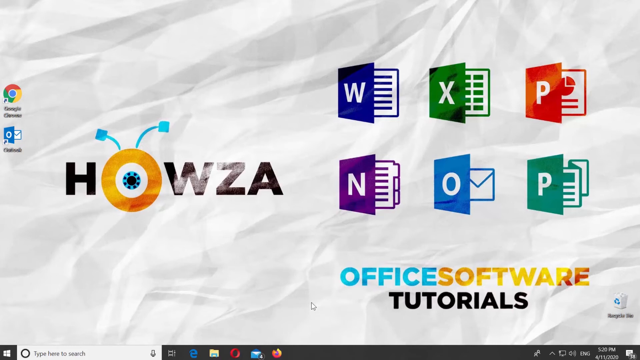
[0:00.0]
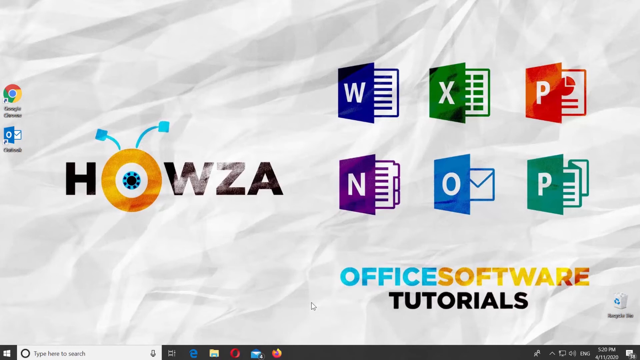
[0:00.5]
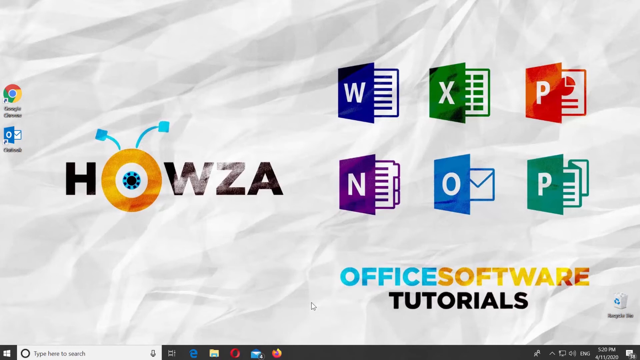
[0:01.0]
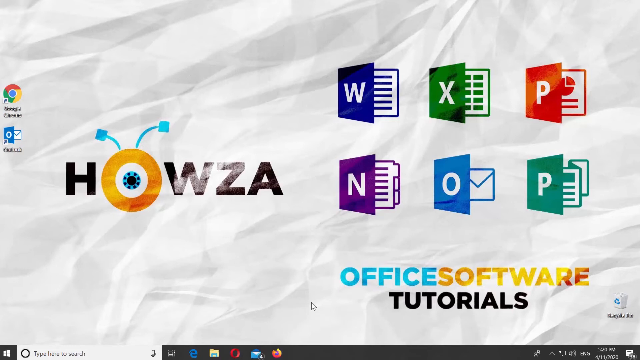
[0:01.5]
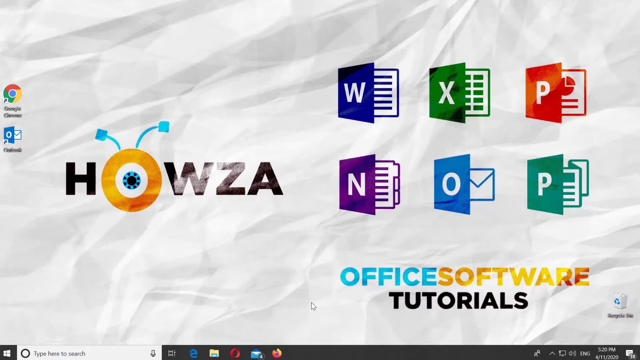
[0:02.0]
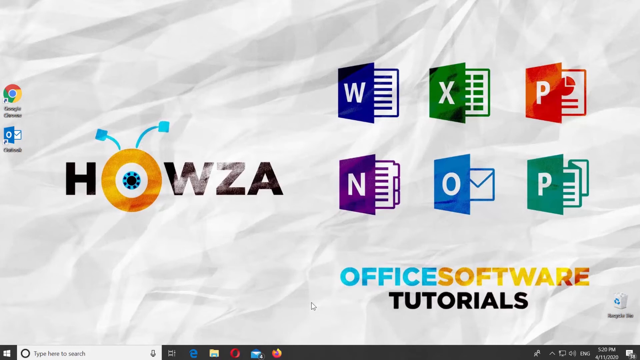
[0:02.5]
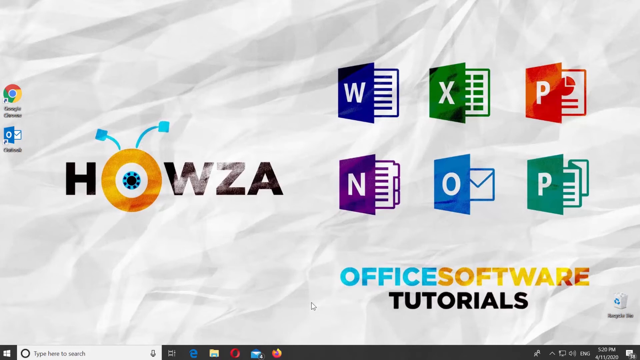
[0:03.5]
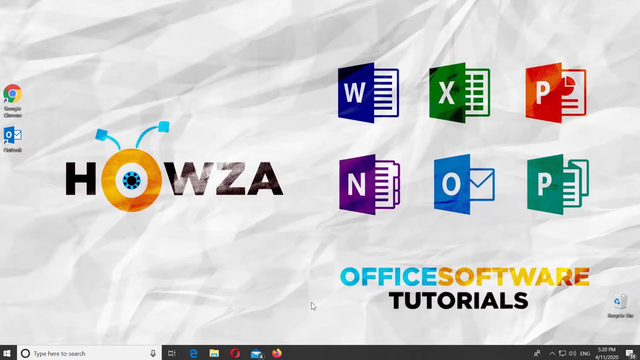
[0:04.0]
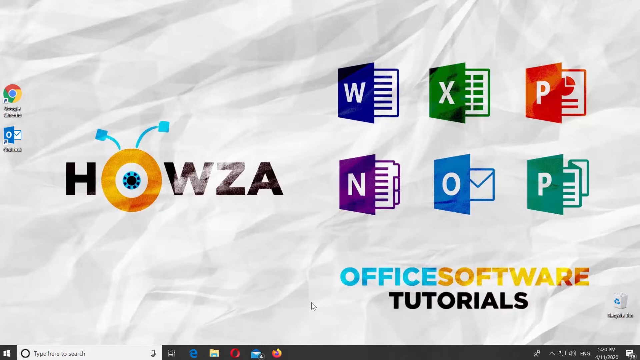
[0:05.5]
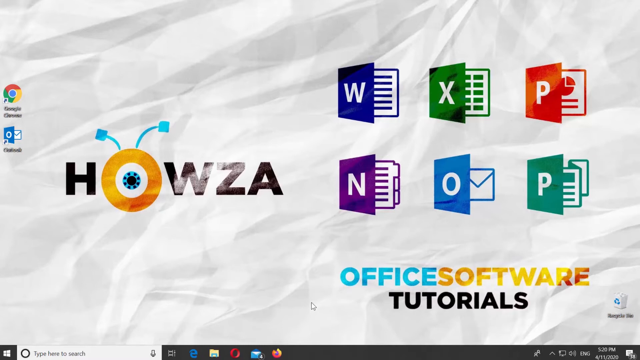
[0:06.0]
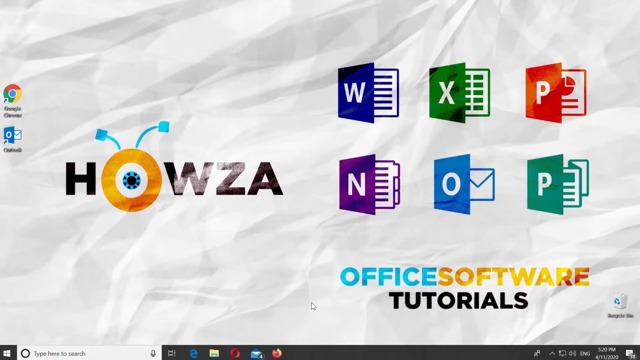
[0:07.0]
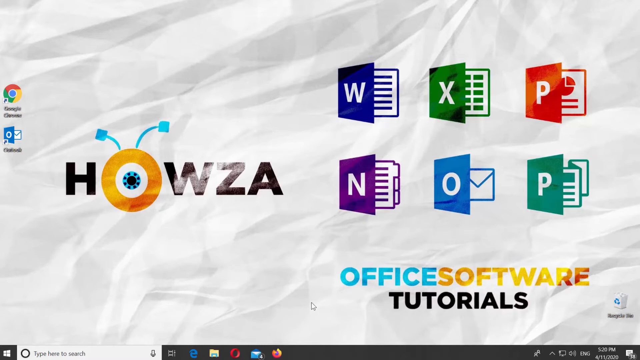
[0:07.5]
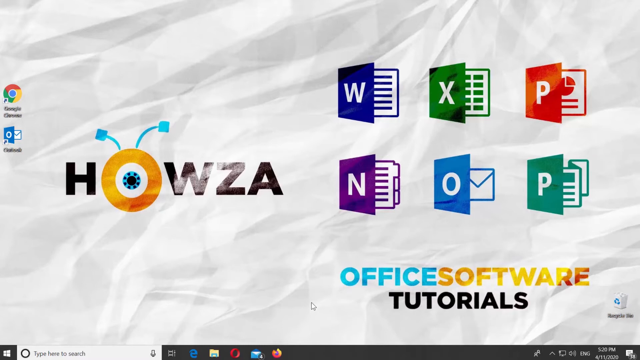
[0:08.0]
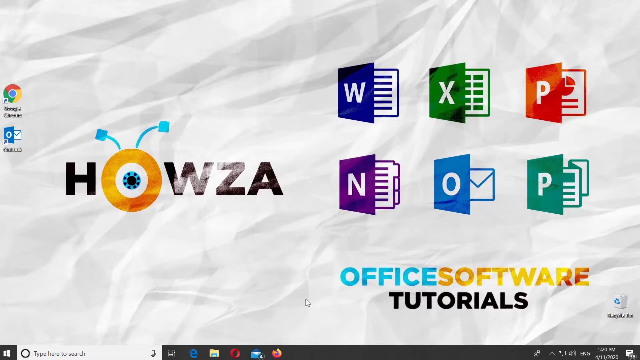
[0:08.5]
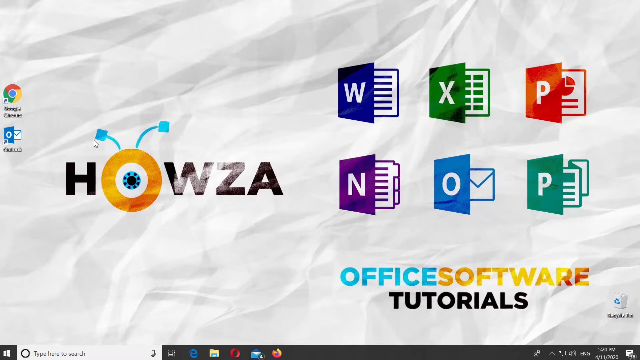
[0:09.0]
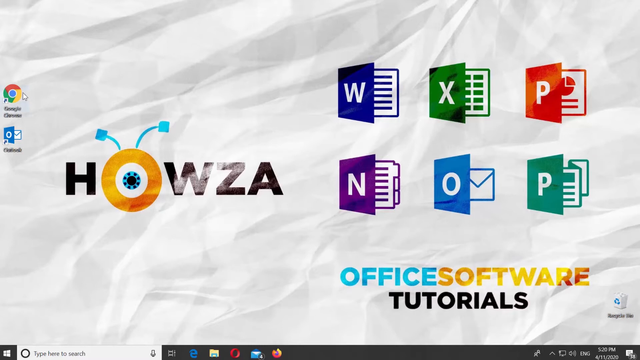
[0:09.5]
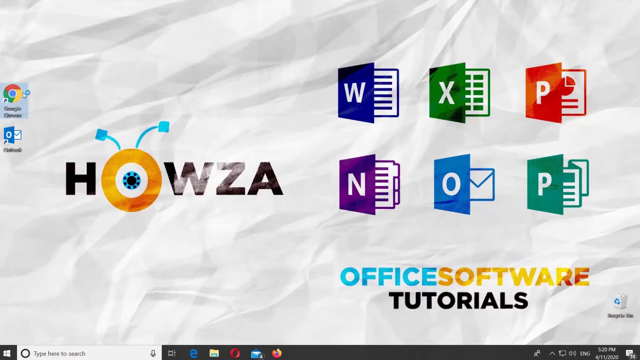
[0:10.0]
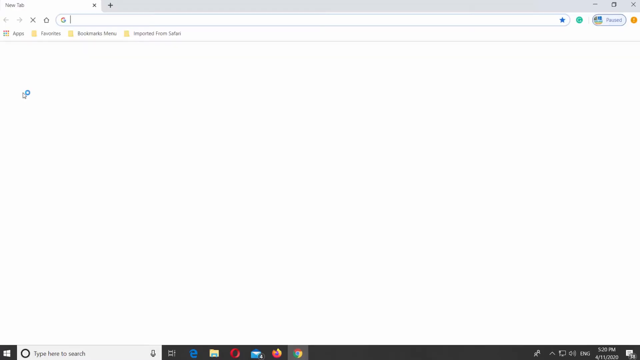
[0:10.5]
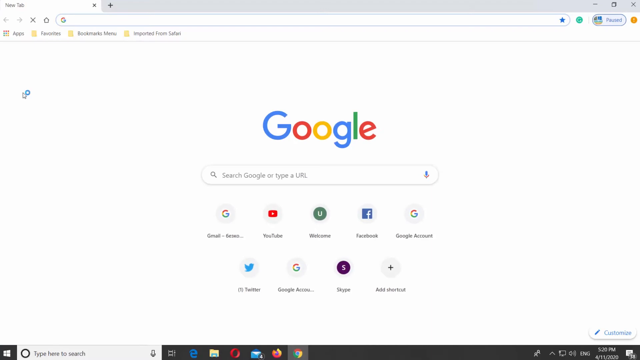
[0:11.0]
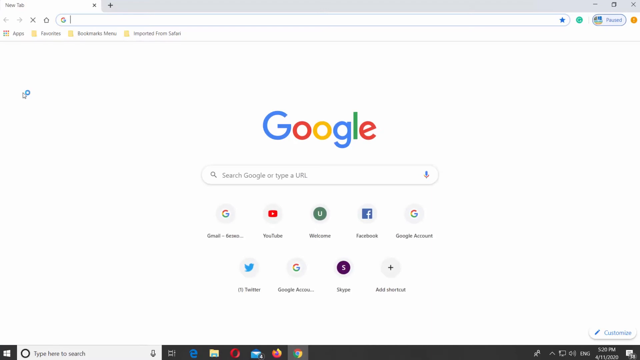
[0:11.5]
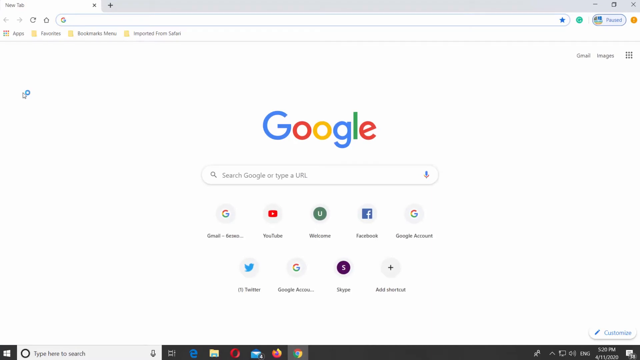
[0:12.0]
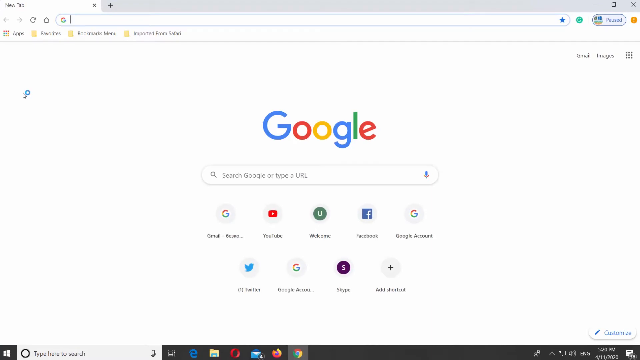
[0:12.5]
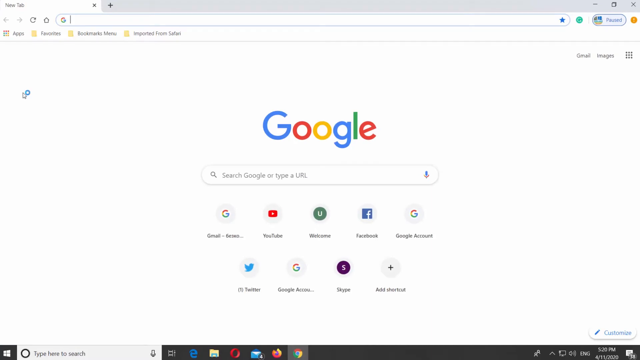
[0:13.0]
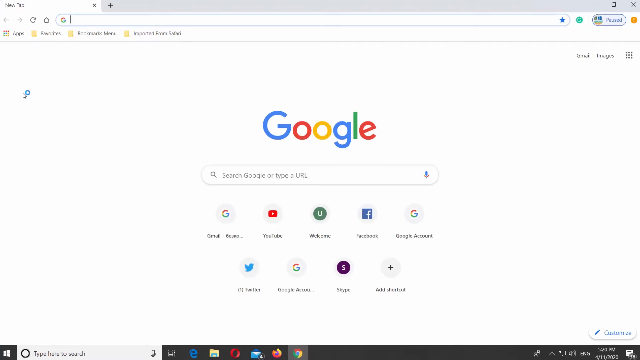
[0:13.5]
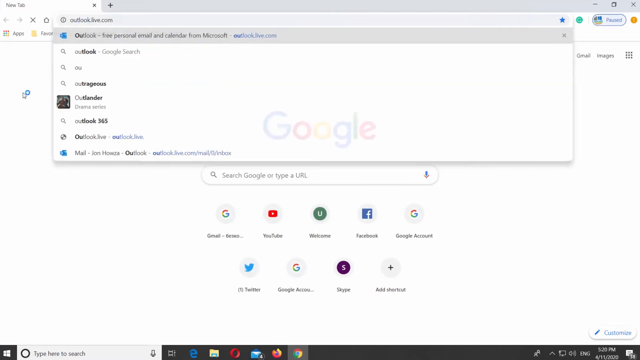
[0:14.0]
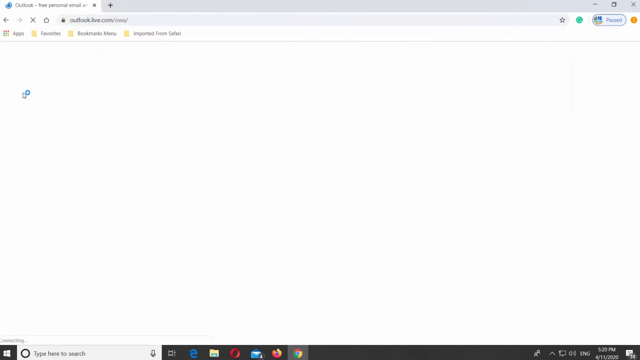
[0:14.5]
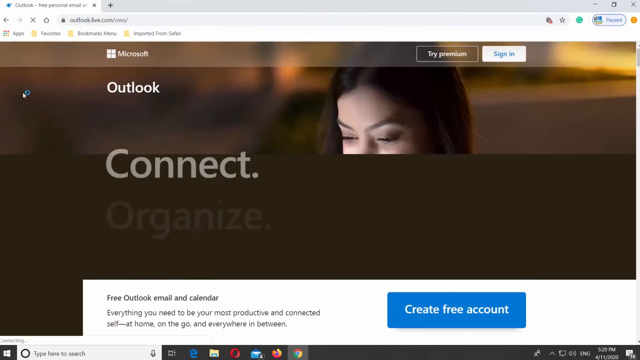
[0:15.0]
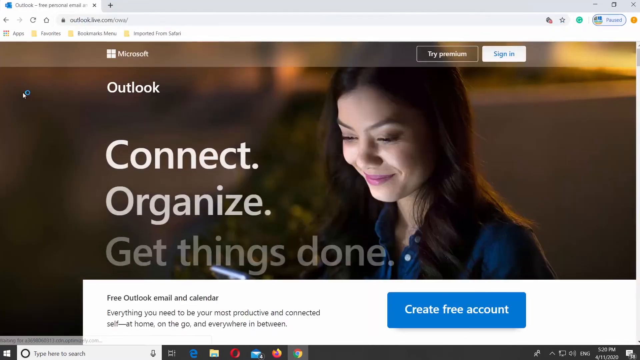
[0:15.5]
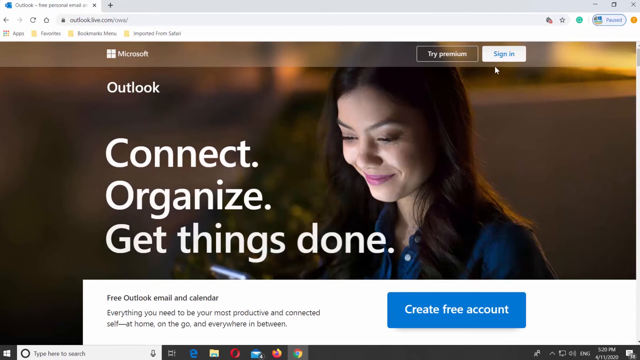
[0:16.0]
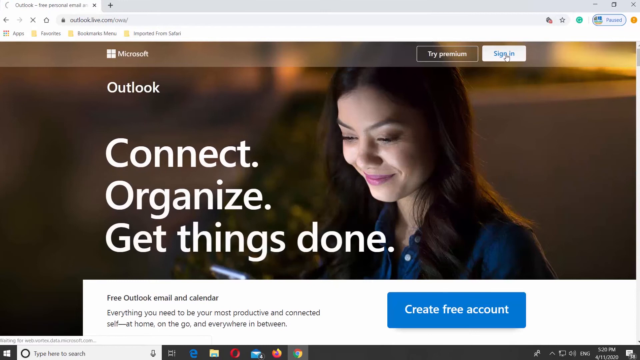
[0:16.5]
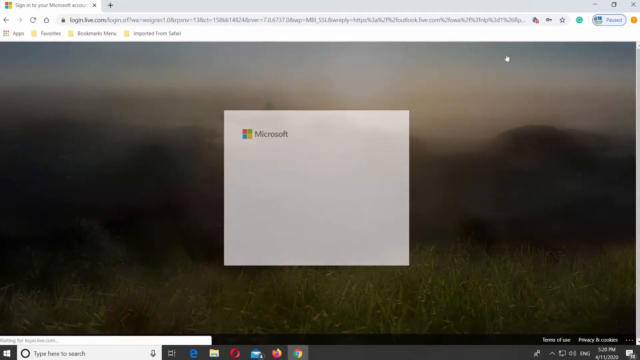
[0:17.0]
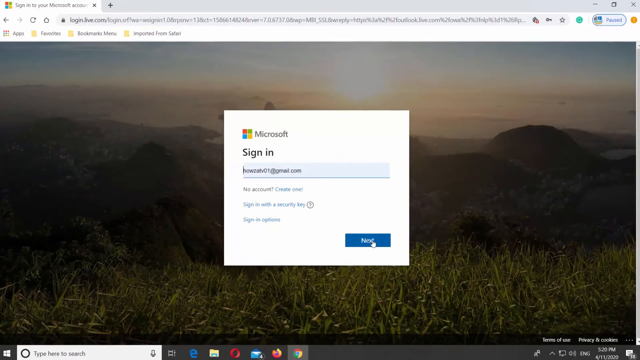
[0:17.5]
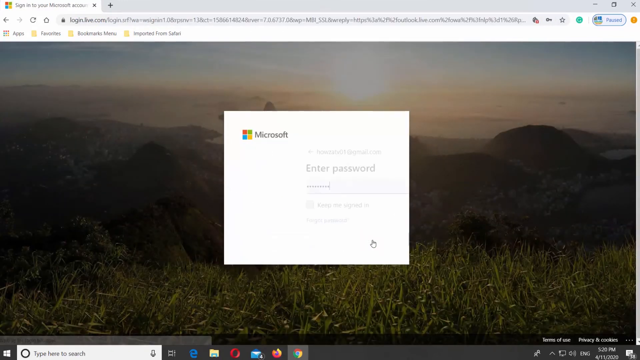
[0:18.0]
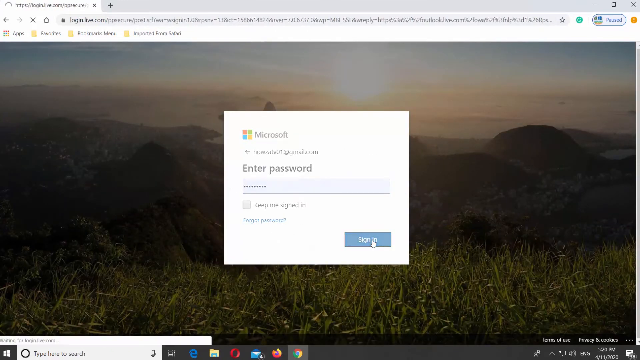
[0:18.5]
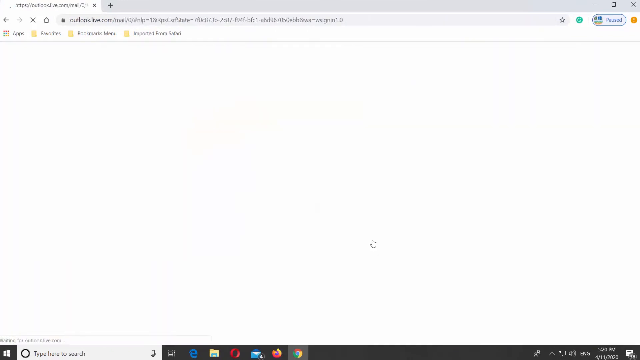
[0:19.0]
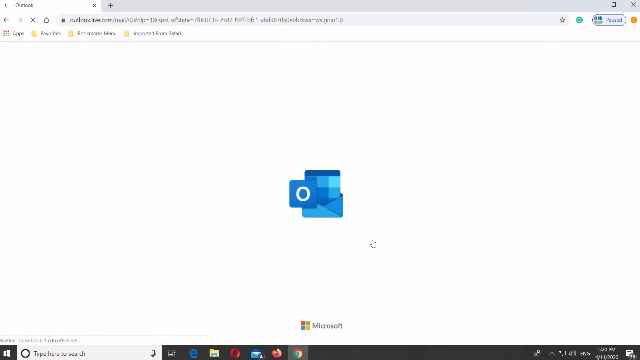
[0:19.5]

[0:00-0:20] An interface appears on what looks like a laptop screen. It has a white background that looks almost like paper, and on it something seems to be advertising Hausa. The different Microsoft features appear on the screen, including Word, Excel, PowerPoint, Outlook, and others, shown in bold colors: blue, green, red, purple, blue, and teal. The O in the word Hausa appears to look like an eye, and it also has antennas. The view then pans over to the Google search engine, and from there it shifts to Outlook. The person controlling the computer then appears to log into their Outlook page.